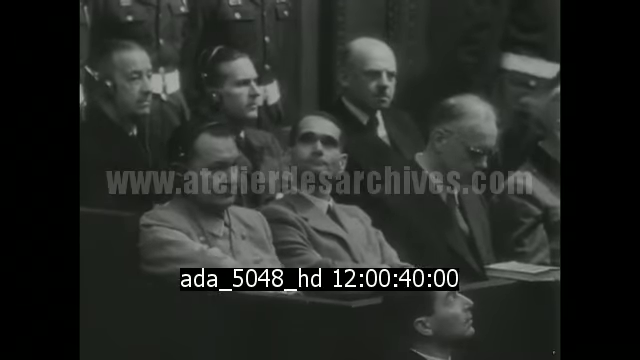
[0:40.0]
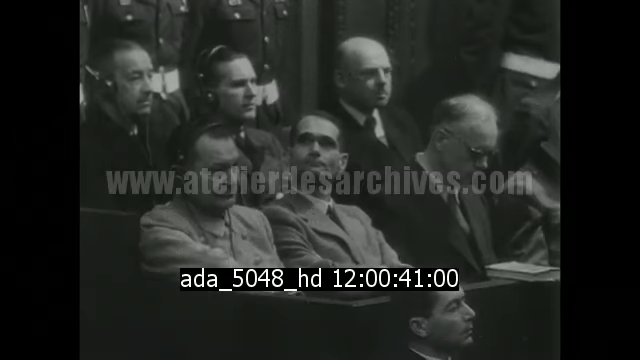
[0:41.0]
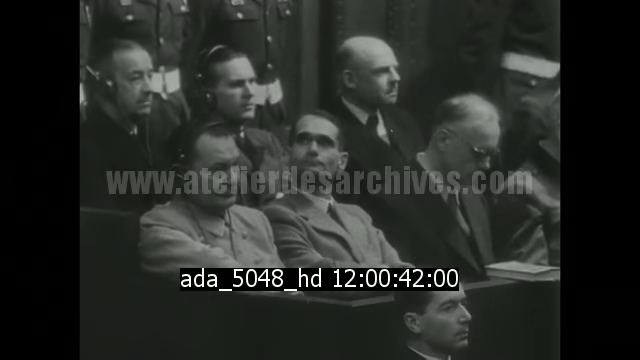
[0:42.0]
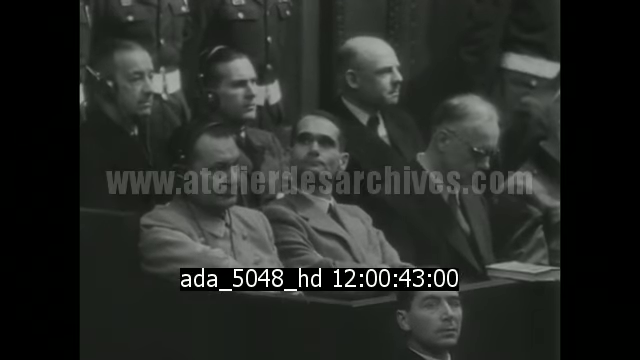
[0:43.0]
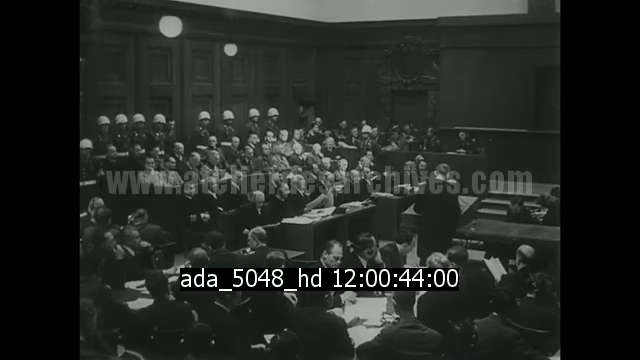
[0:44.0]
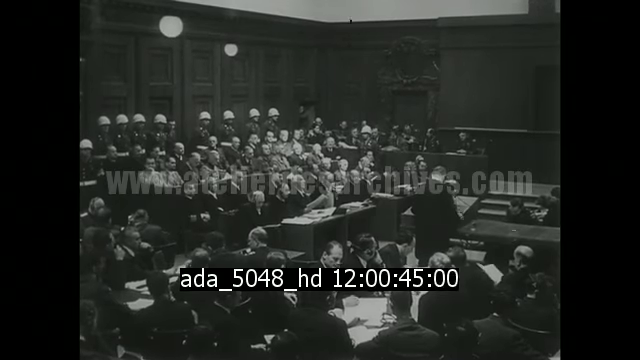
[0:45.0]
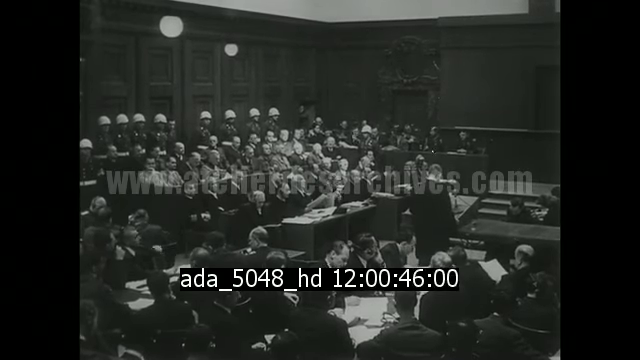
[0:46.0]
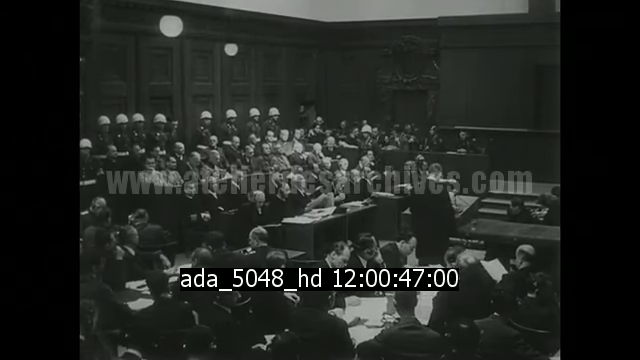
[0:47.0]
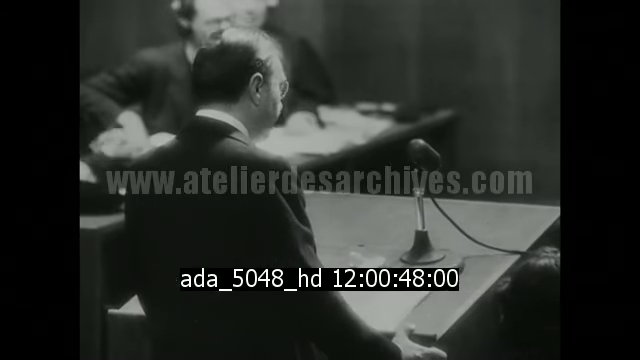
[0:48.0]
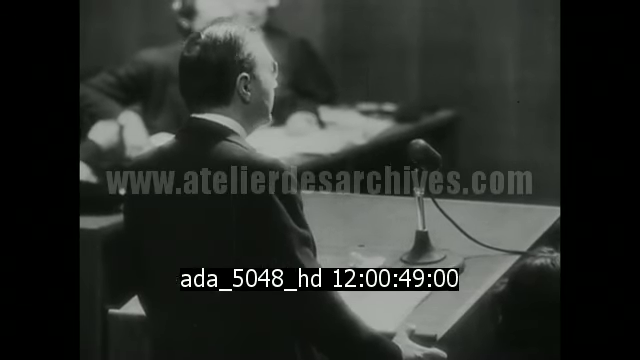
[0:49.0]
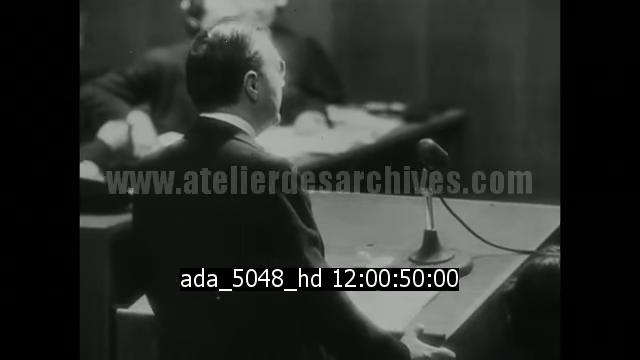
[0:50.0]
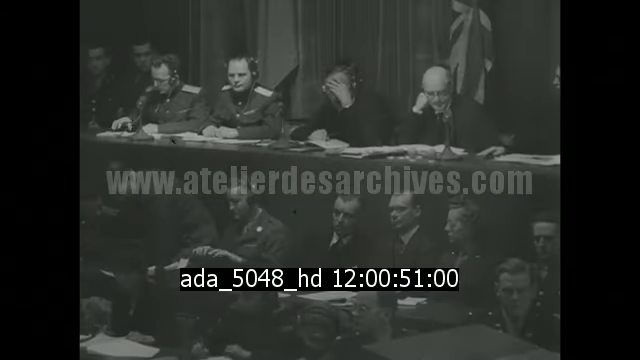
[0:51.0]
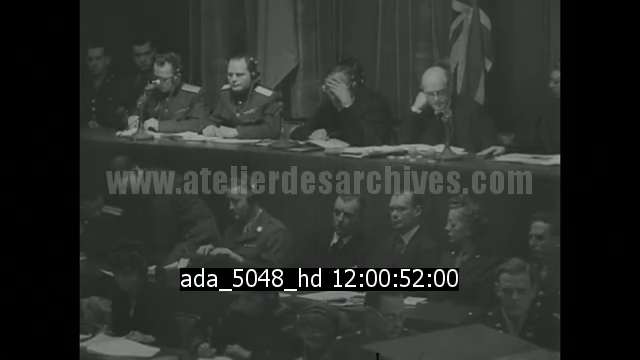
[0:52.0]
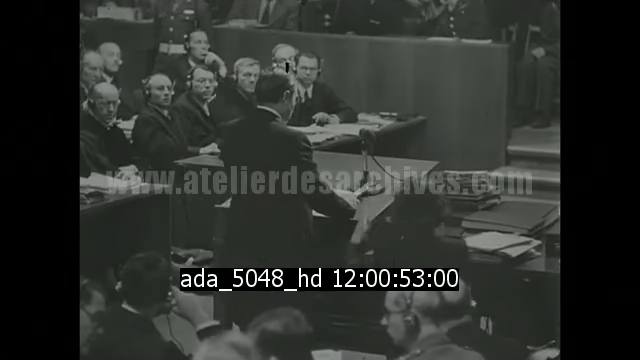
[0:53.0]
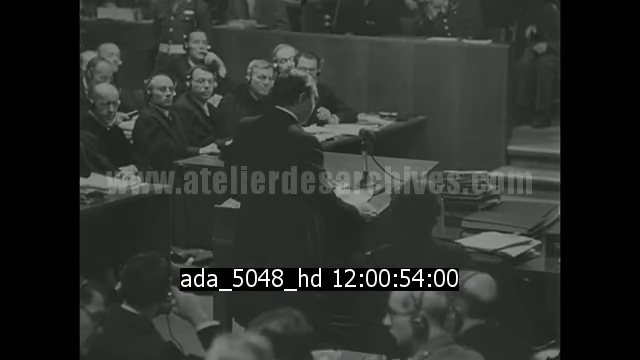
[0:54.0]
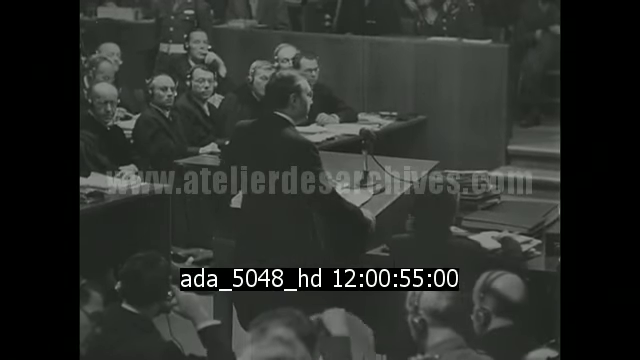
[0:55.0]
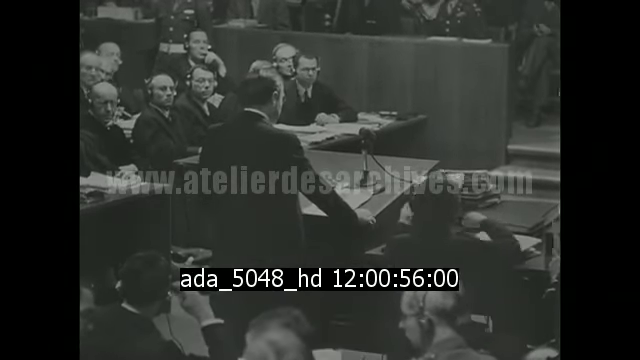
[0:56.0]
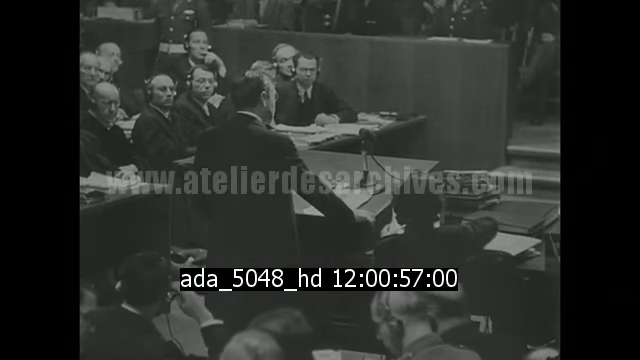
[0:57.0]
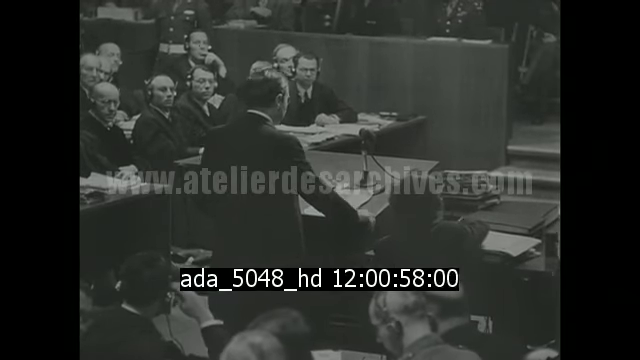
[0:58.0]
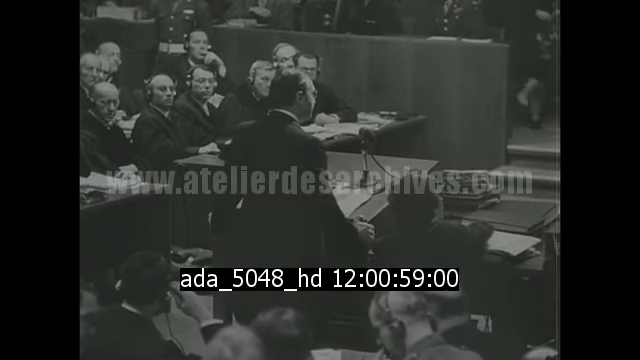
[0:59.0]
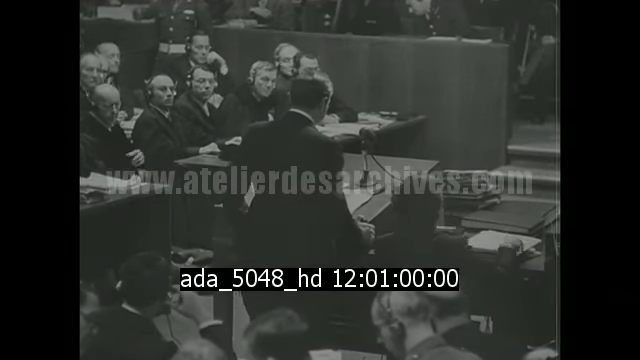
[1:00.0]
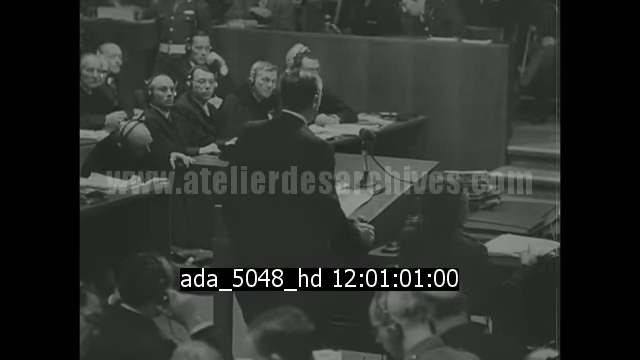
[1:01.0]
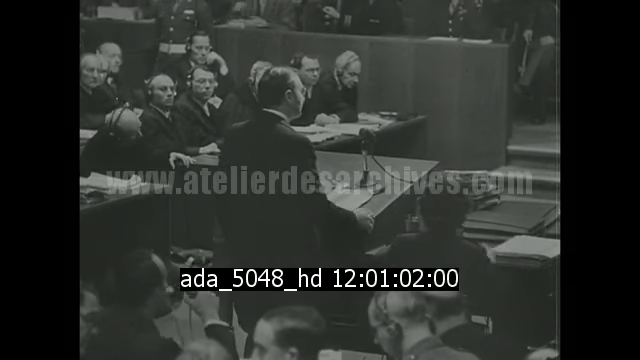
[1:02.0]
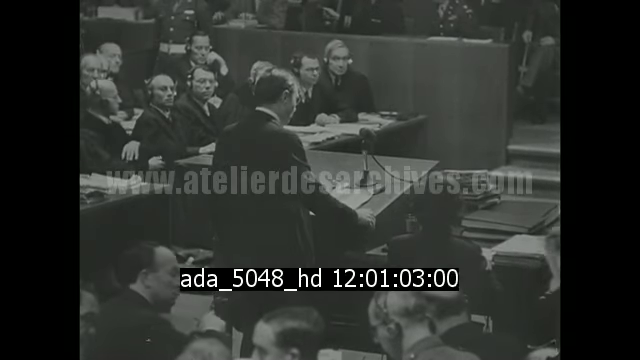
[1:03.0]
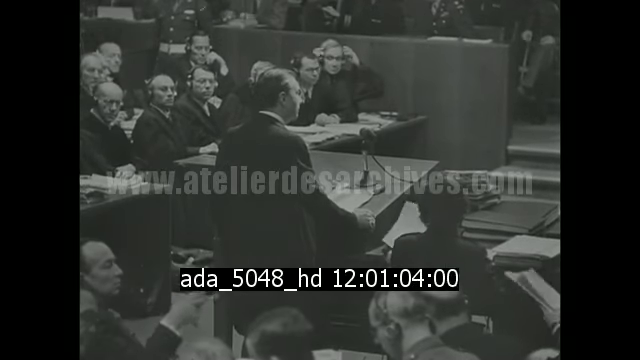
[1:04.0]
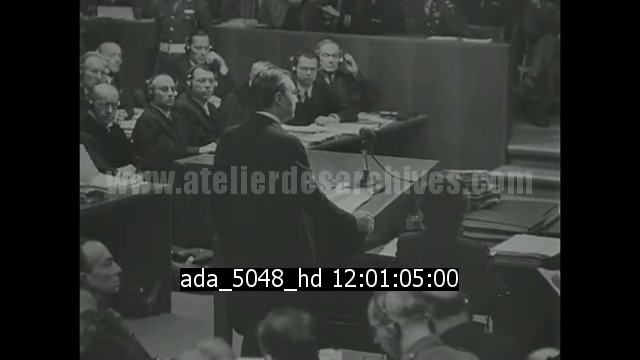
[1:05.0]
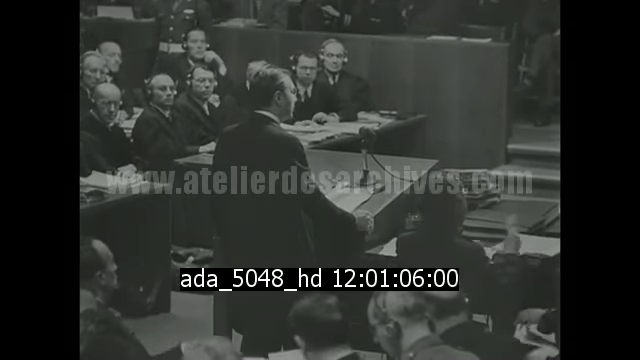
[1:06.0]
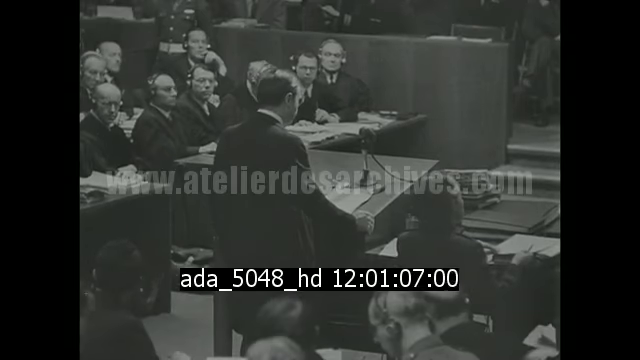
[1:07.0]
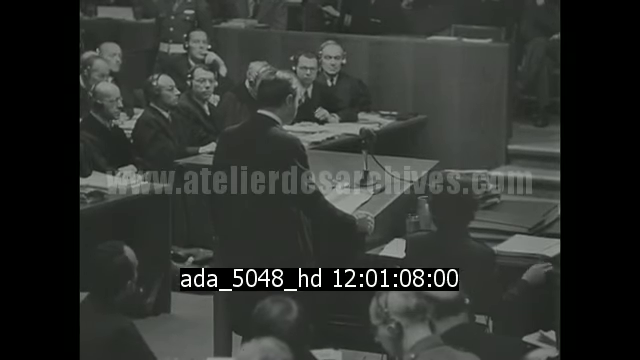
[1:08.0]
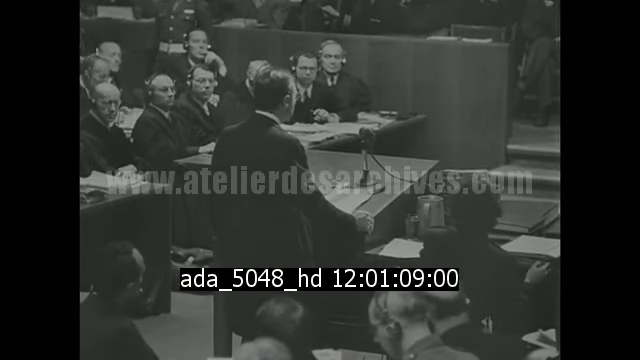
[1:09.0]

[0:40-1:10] Soldiers with firm expressions sit in a row. A speaker talks into a microphone on a stand with a wire coming off it. The people testifying wear suits and look very serious.